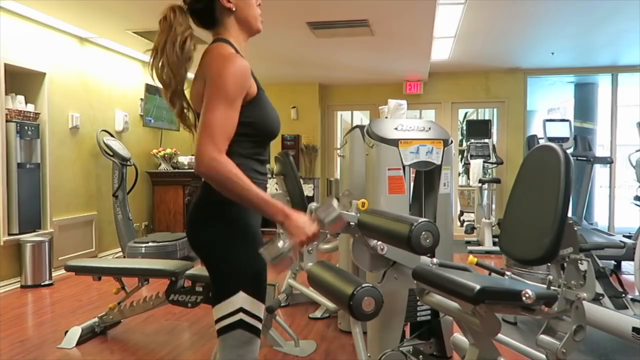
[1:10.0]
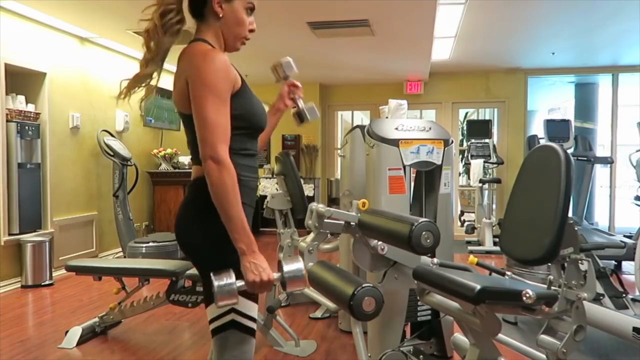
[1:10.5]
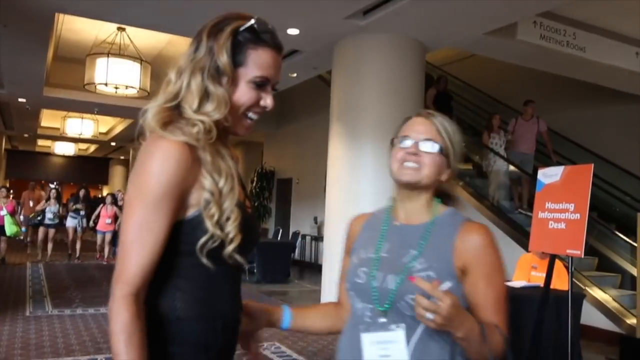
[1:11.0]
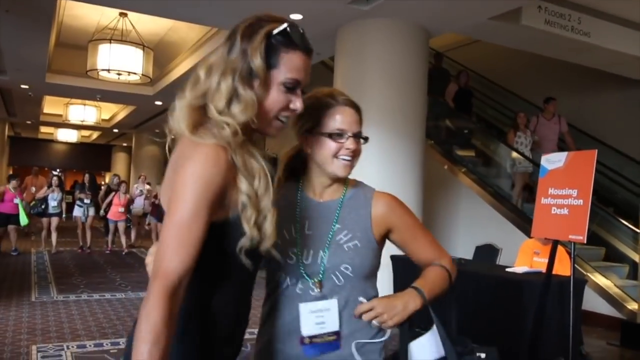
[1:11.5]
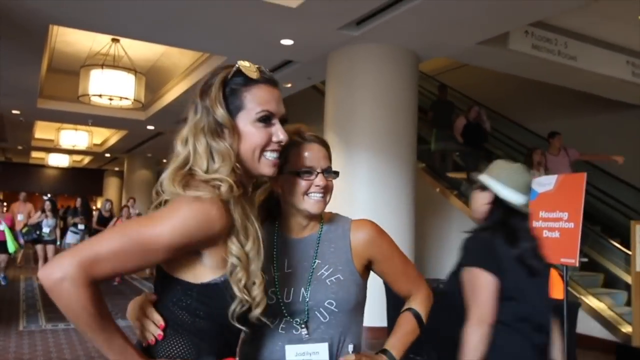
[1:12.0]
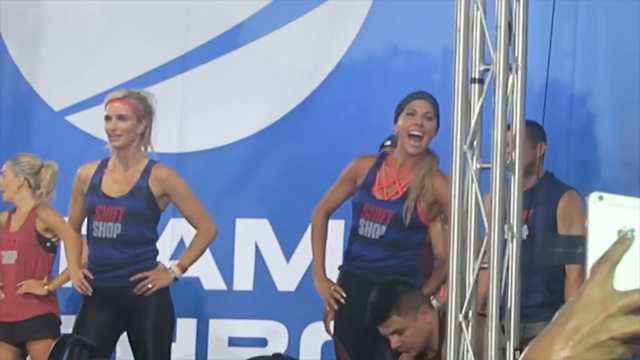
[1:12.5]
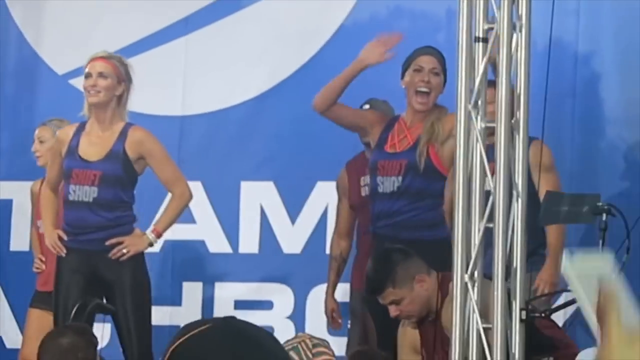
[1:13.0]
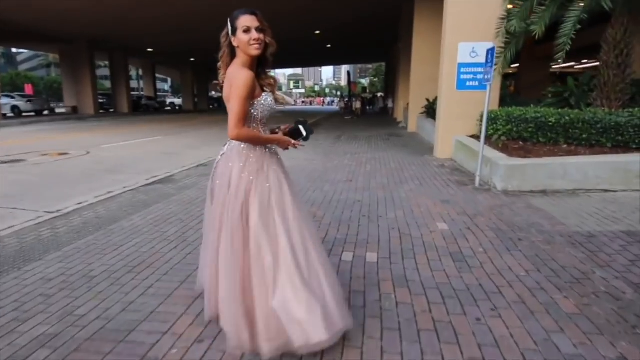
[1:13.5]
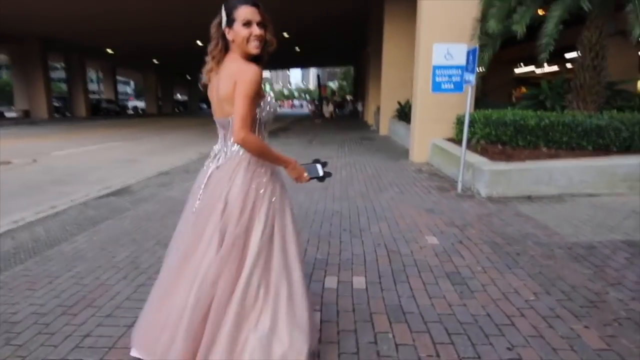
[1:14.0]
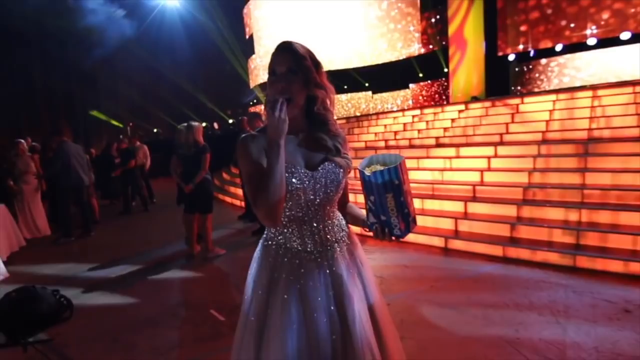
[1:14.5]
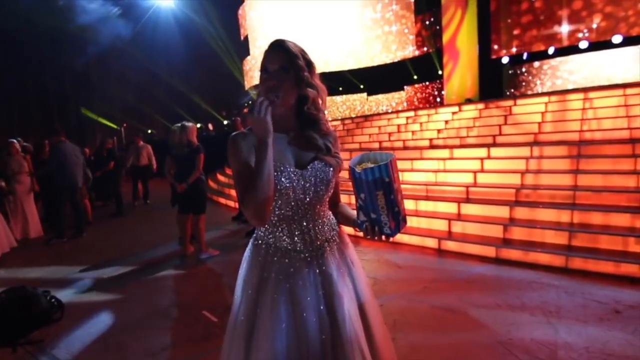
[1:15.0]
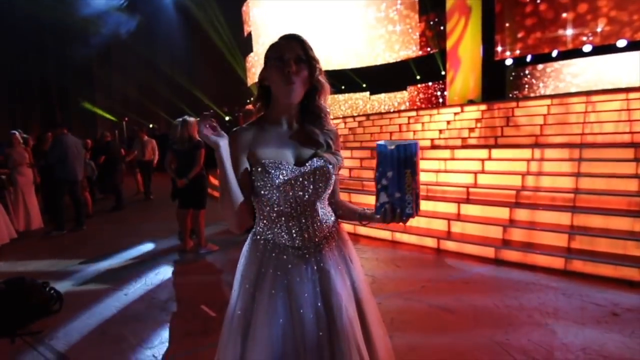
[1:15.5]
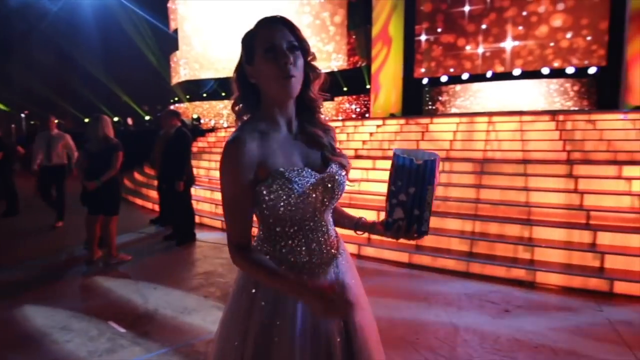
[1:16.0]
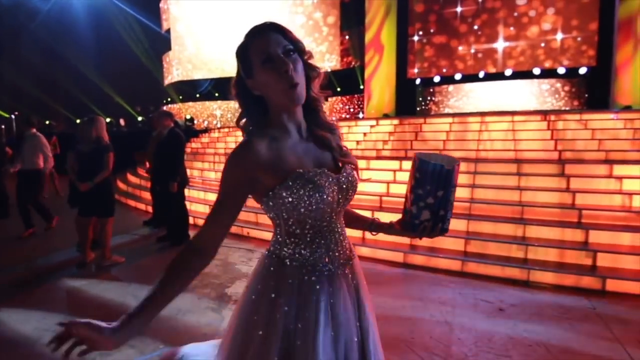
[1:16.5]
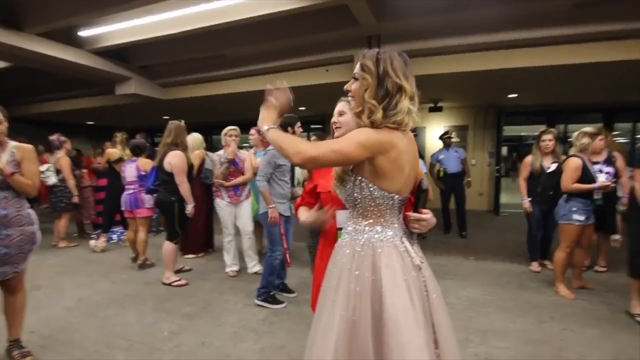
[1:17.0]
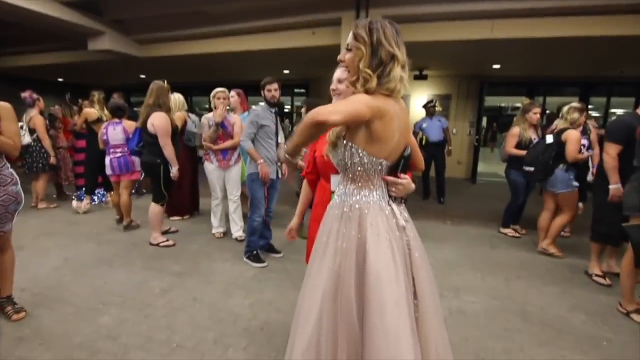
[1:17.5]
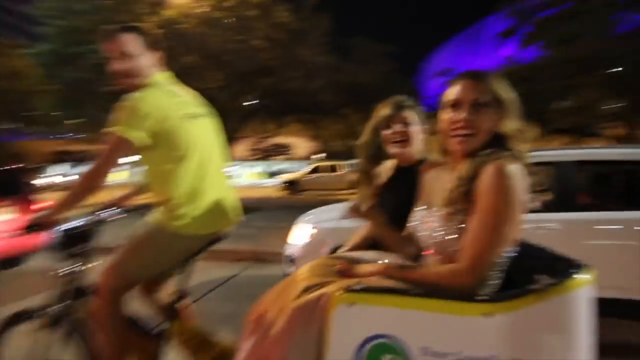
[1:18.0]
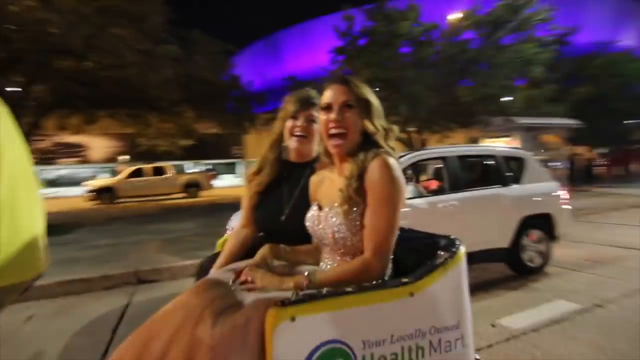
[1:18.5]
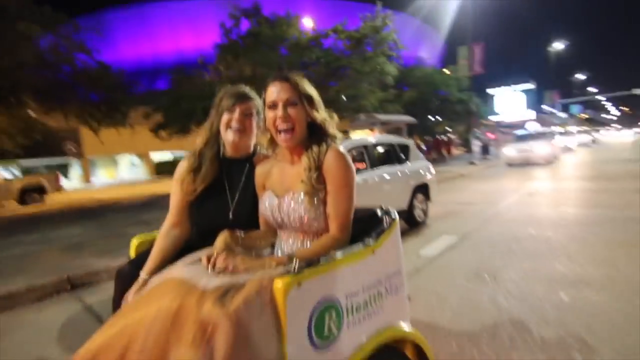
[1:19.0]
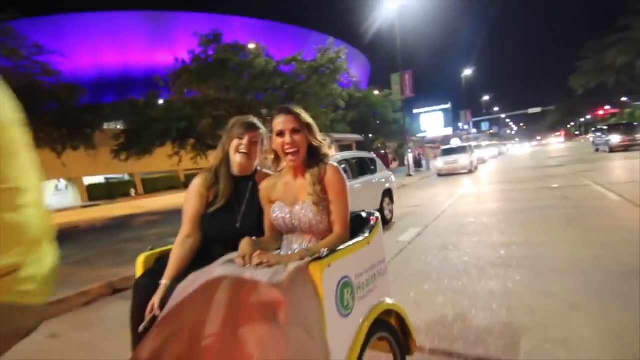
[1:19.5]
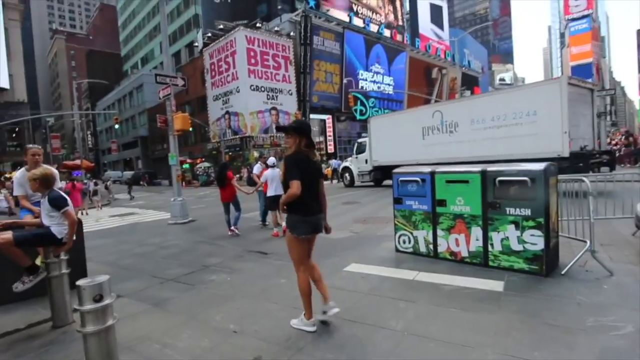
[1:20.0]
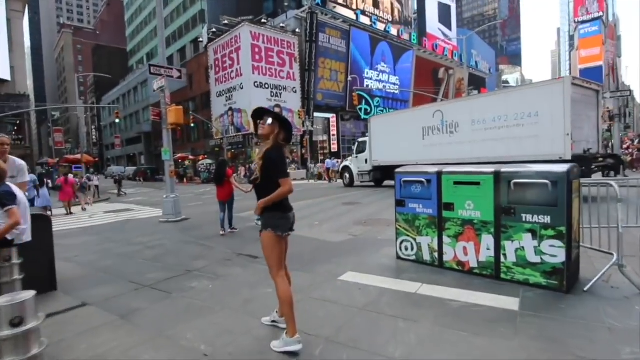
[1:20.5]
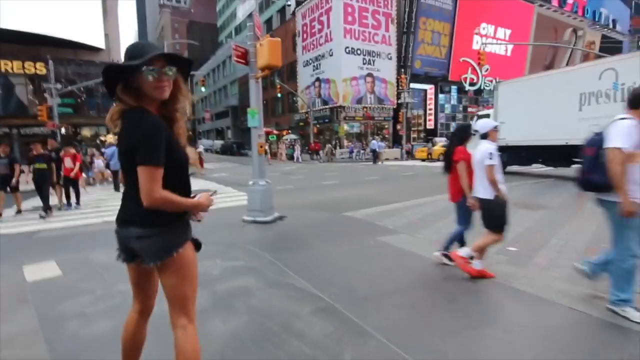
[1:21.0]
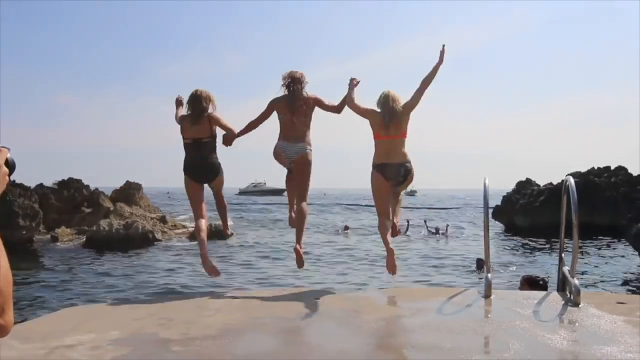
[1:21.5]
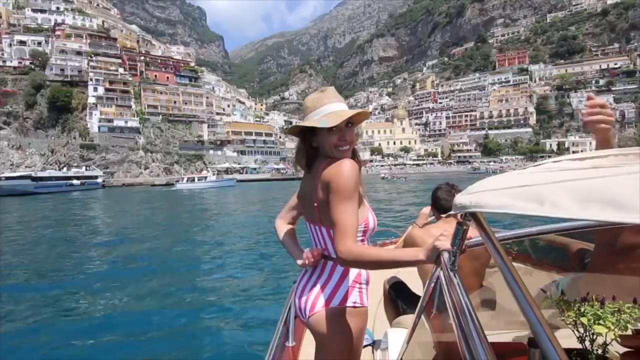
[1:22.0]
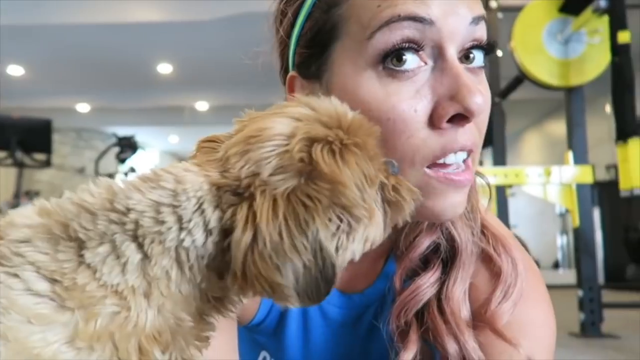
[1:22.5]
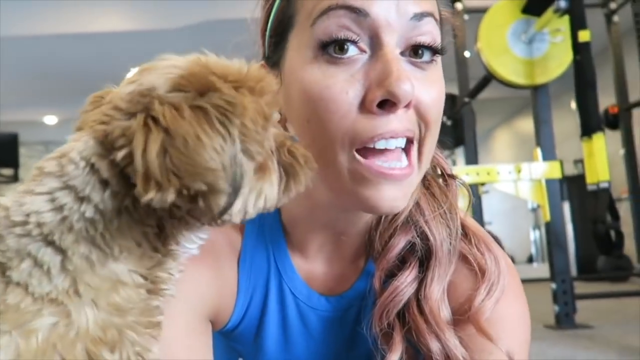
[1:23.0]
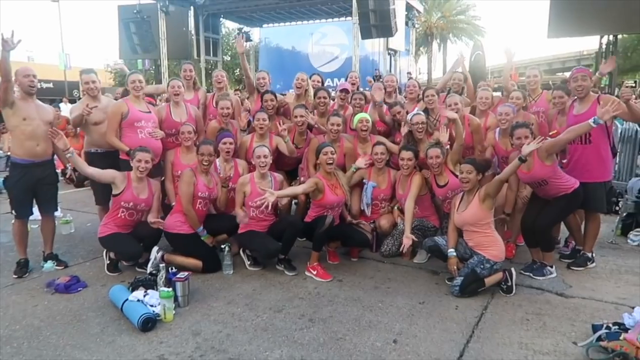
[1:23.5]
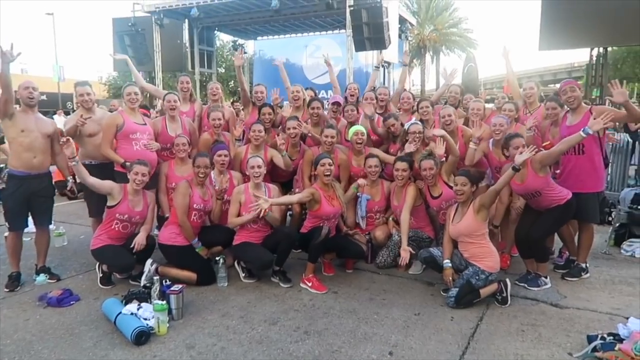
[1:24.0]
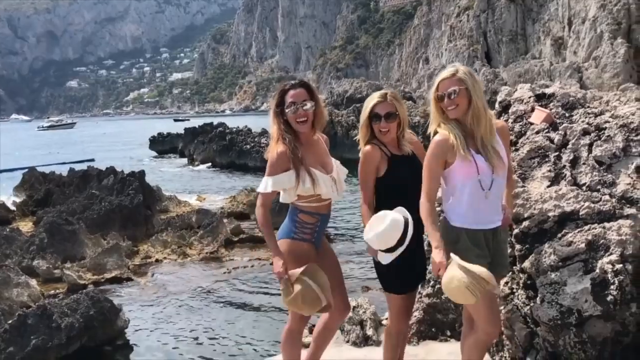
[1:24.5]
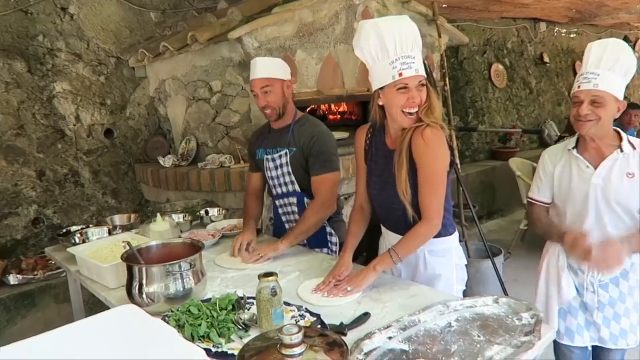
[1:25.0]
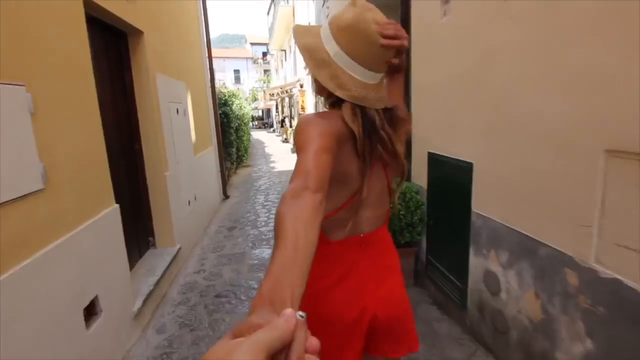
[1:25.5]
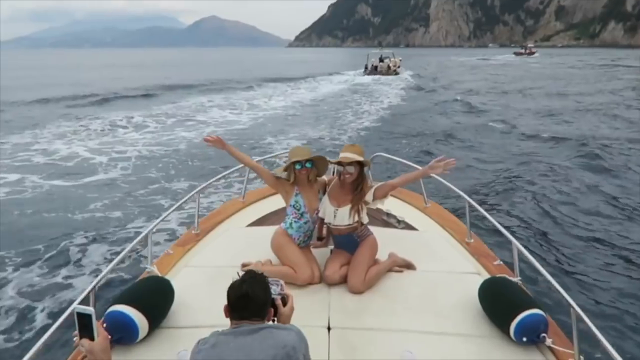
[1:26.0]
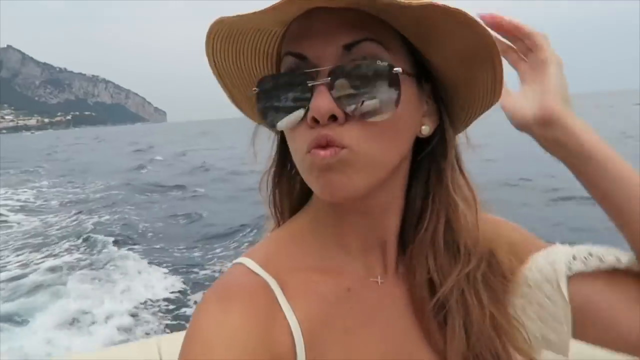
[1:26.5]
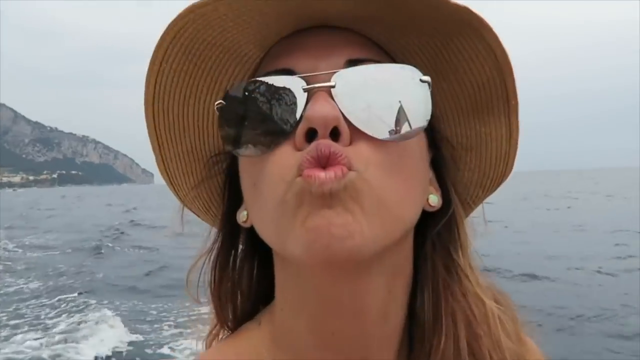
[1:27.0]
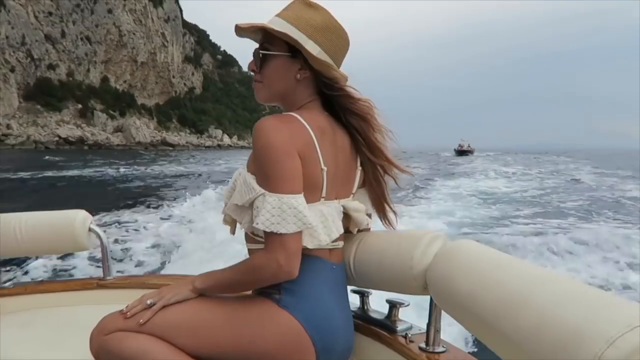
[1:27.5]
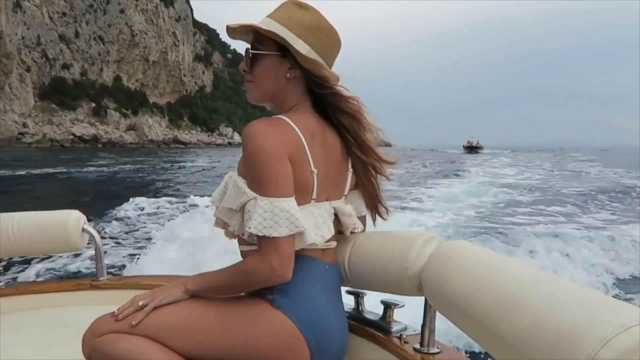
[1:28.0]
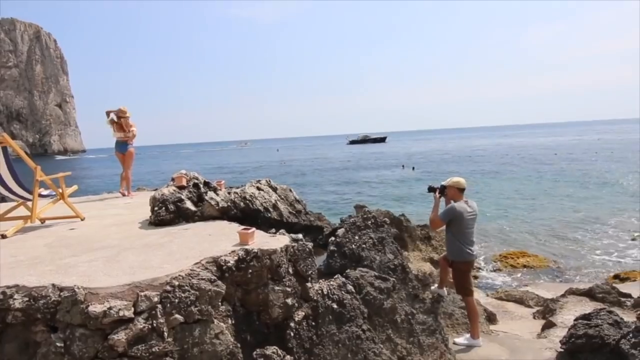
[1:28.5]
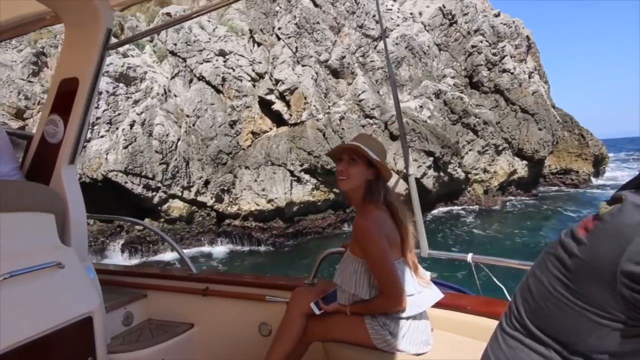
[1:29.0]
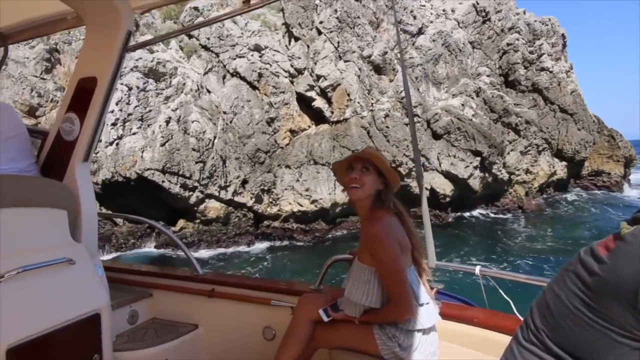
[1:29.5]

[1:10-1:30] A long-haired woman exercises in a gym, wearing a black sleeveless exercise top and black and white leggings, with a lot of gym equipment around her. The woman poses for a photo with another woman, with many other women in the background, while an escalator with some people on it is visible on the right side of the screen. A group exercise session featuring mainly women follows, with a man partially visible at the bottom right of the screen. The woman wears a flowing dress that reveals her back as she turns around with a smile. In the next scene, wearing the same dress, she holds what is possibly popcorn and eats it as she stretches her right hand playfully. She then poses for a picture with another woman who is wearing red, with many other women in the background. The video cuts to the woman and another woman laughing together in what is possibly a tourist cart in the middle of a road. The woman stands in the middle of a busy city, and then jumps into water with two other women. She looks back with a smile, wearing a hat, standing in a ship, with teal water and a hilly city behind her. A close-up shows the woman with a small dog beside her in a gym, followed by what is possibly a group of exercise enthusiasts smiling, laughing and raising their hands as they pose for a photo. The woman and two other women are in front of water and a hilly mountain, and then the woman poses as a chef with two men who are possibly actual chefs. She walks along a narrow pathway with two buildings flanking her. The woman is with another woman on a ship as a dark-haired man tries to take their picture. Wearing a dark shade and a hat, the woman makes a kiss gesture towards the camera. A close-up shows her sitting at the edge of a ship, with water and a hilly mountain behind her. She then sits in a ship, and then walks in a busy city.